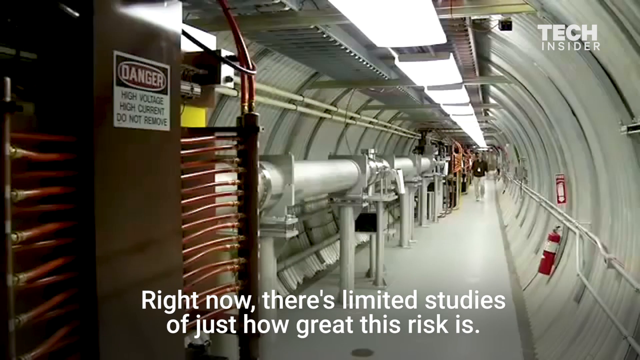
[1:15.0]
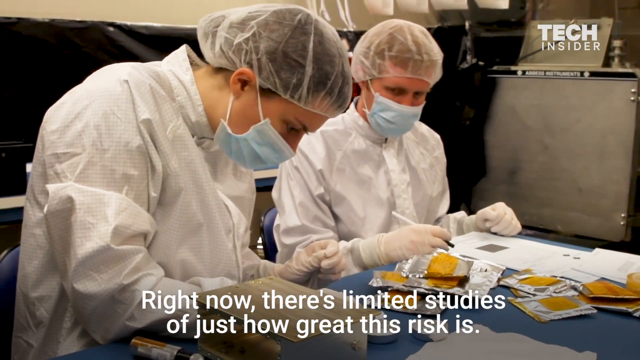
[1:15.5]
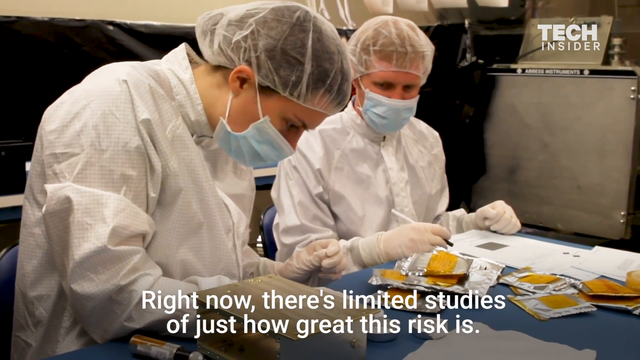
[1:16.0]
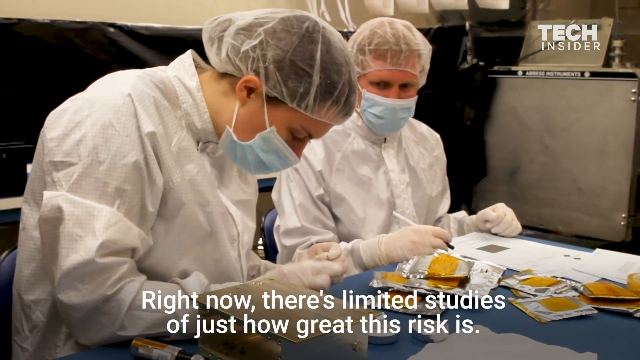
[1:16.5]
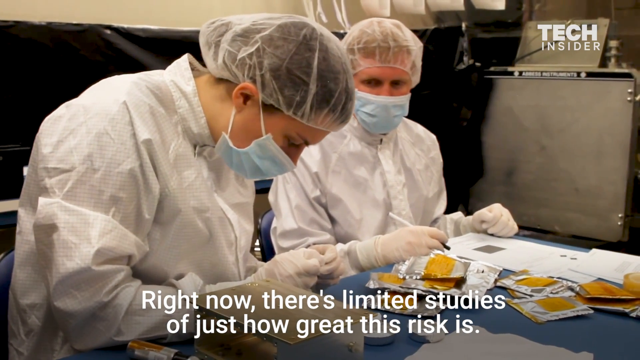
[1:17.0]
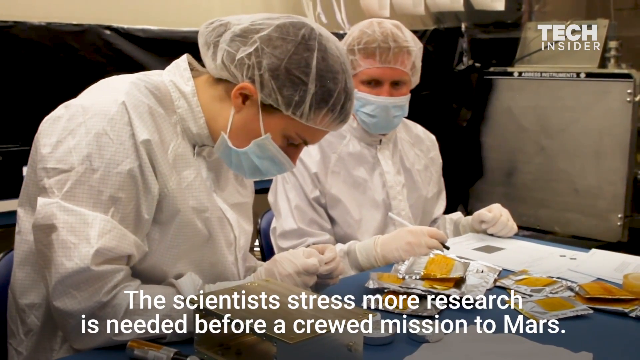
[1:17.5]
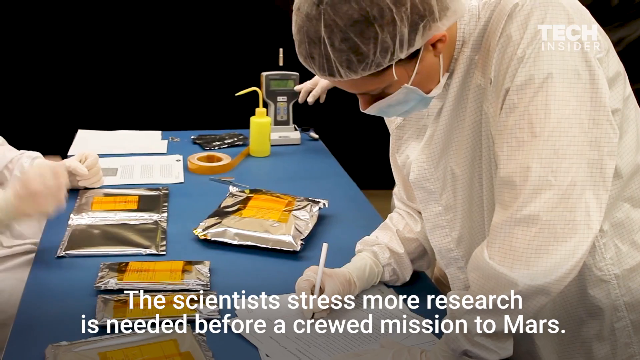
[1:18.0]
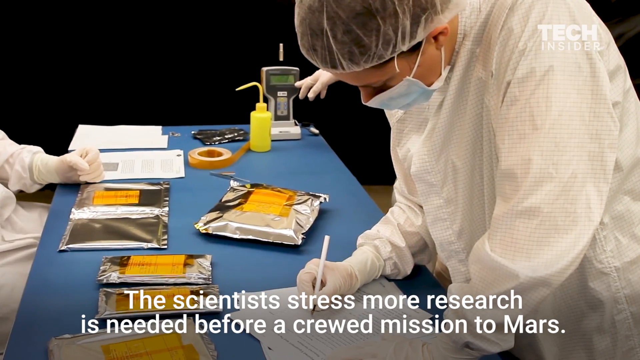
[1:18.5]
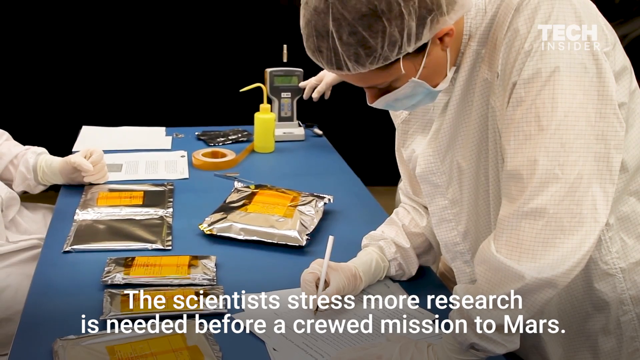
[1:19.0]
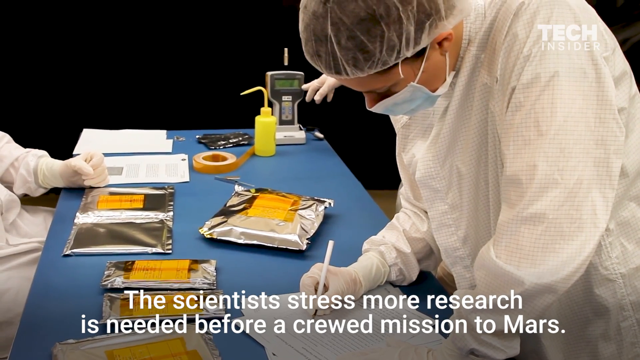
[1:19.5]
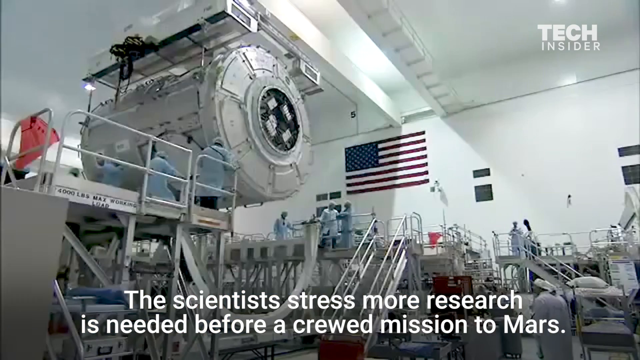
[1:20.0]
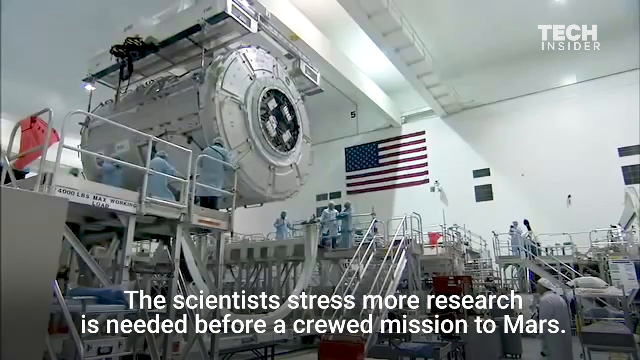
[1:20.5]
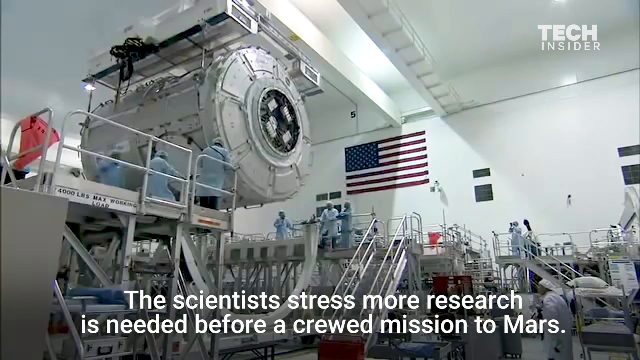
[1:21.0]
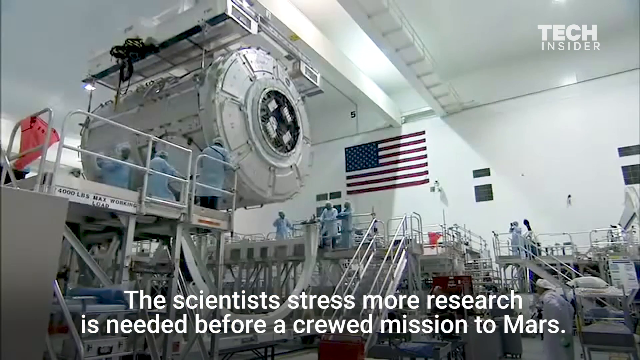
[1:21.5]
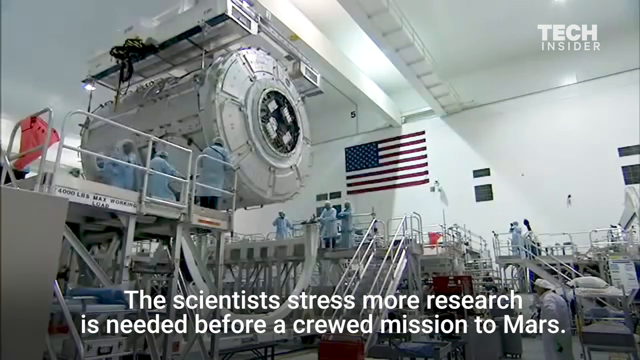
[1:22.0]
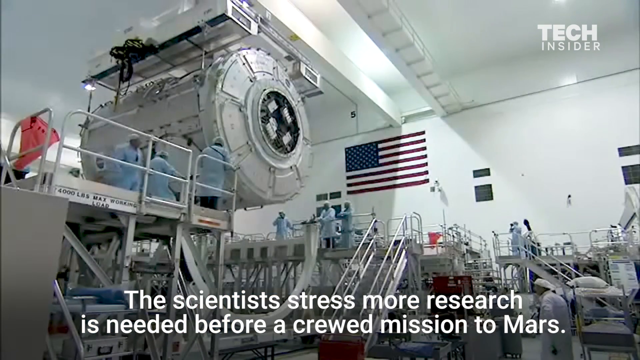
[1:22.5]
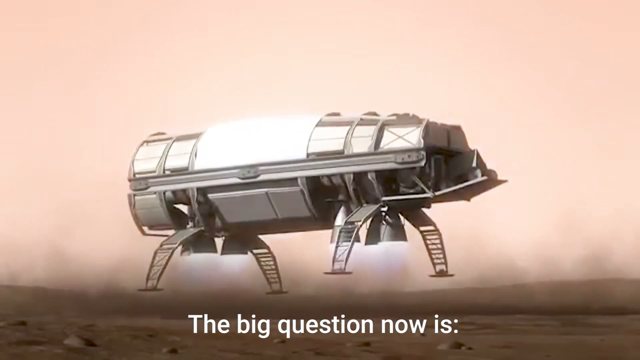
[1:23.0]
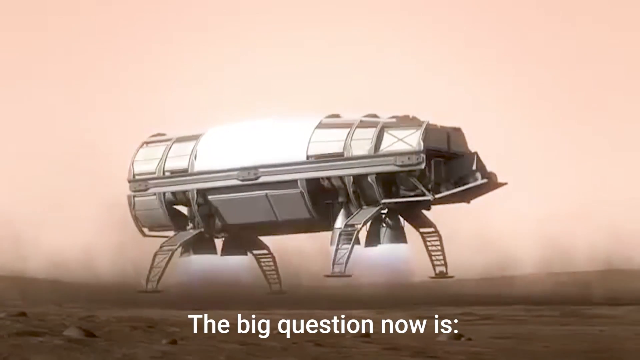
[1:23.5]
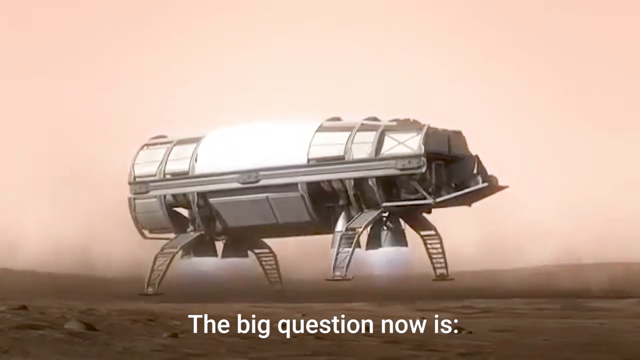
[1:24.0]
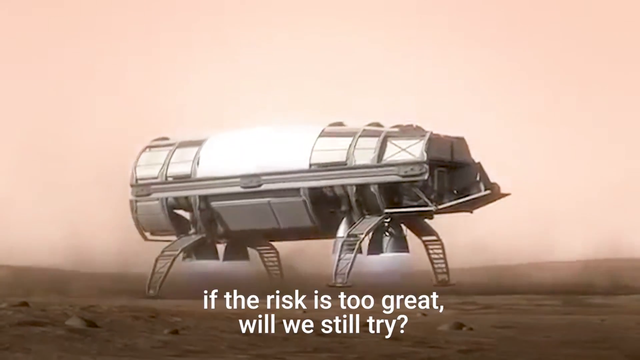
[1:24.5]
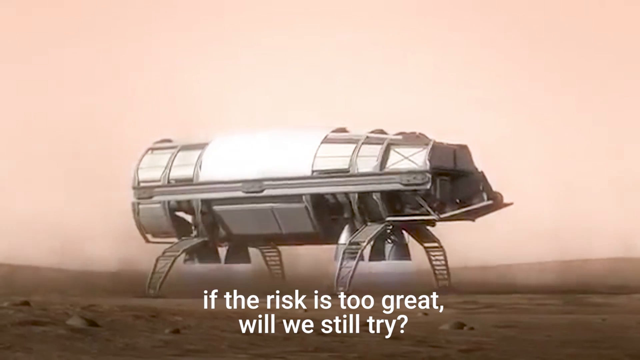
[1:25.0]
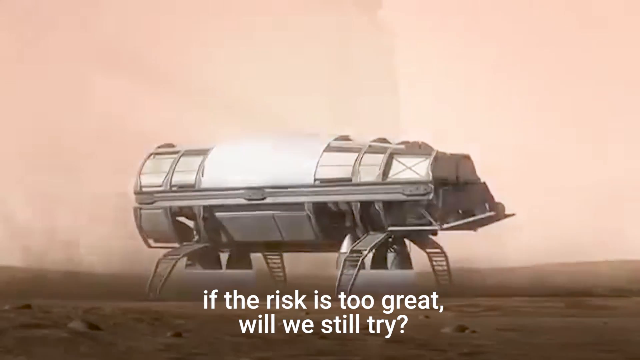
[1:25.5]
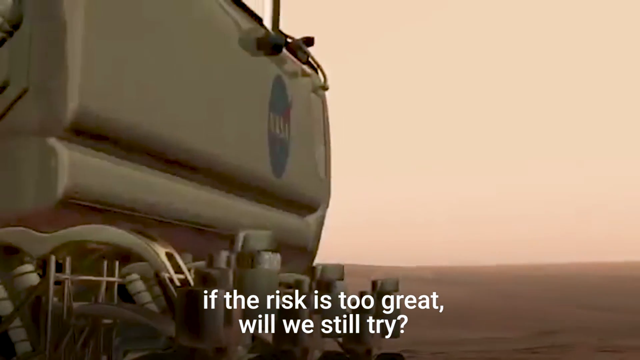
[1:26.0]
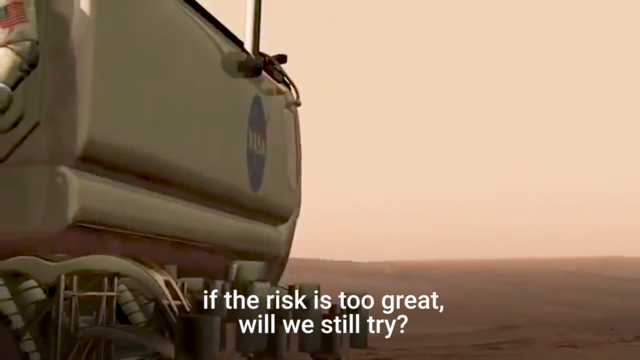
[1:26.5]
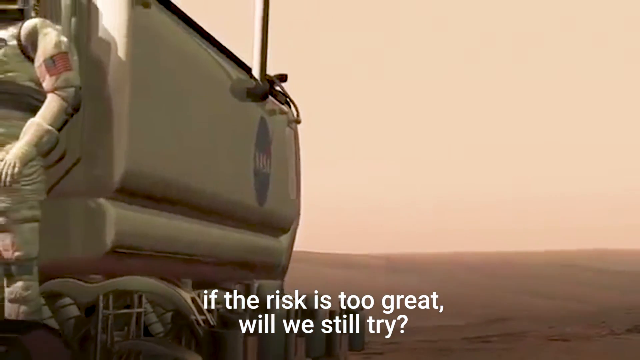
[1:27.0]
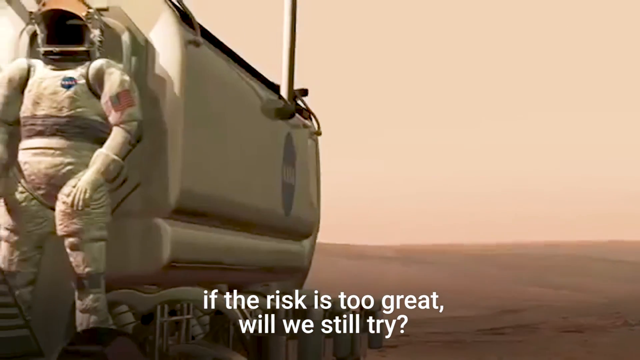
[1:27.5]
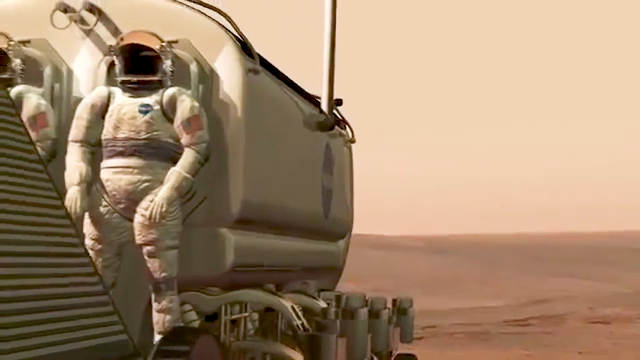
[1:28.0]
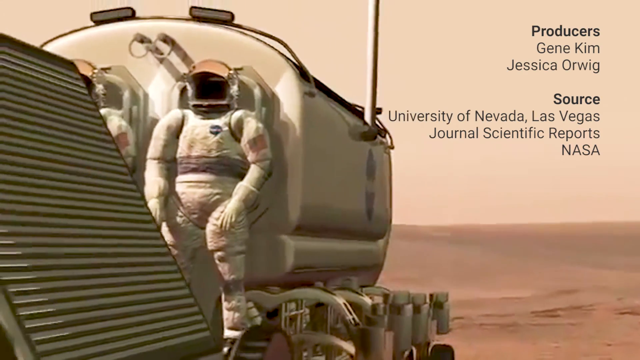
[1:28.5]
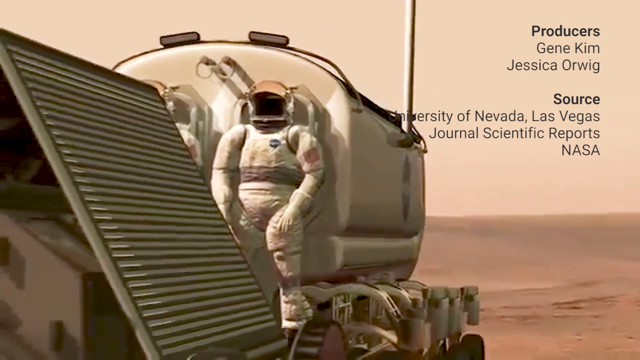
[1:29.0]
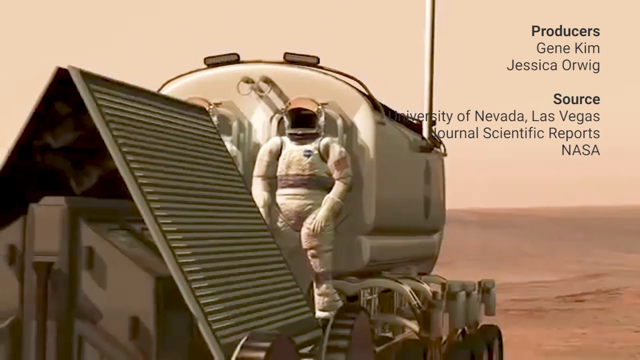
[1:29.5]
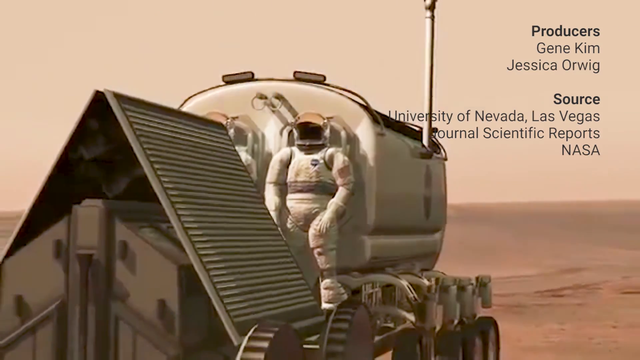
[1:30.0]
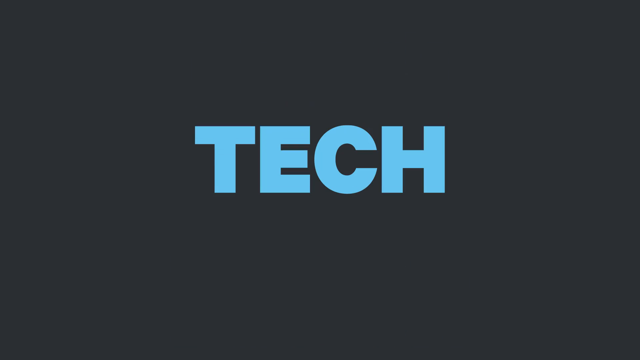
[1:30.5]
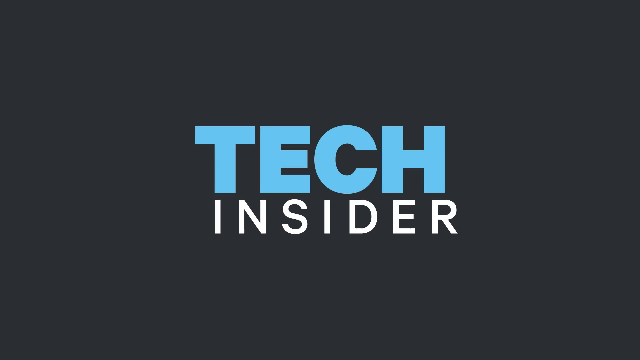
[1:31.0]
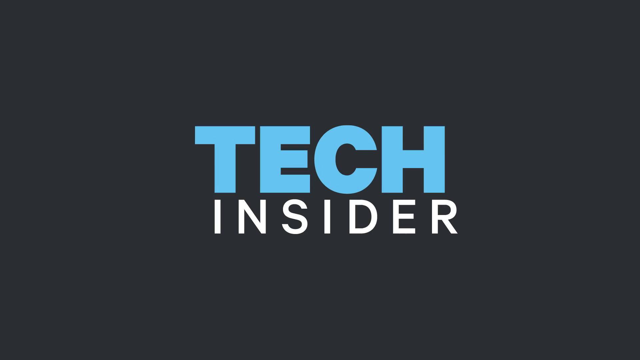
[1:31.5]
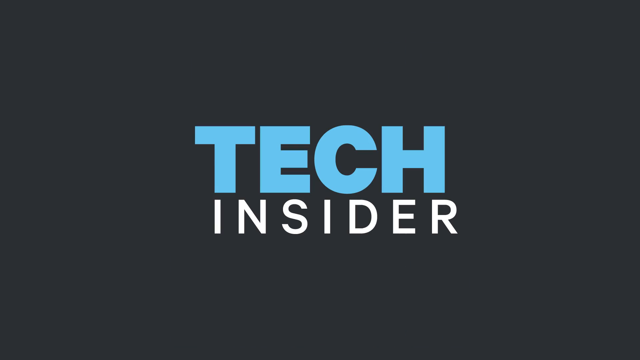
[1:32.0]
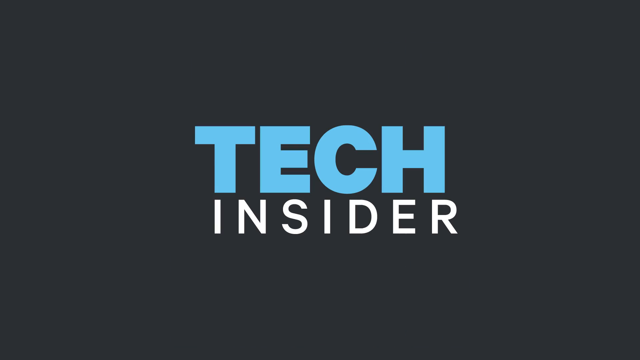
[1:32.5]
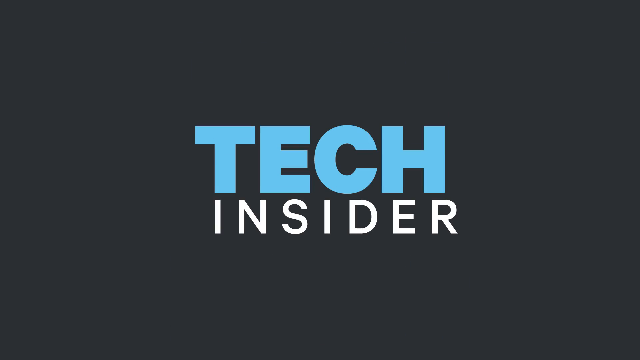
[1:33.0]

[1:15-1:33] Teams of people wear clean suits with nets on their hair and masks across their faces. They seem to be inspecting or working on equipment, possibly to be flown to Mars. A wider shot shows some sort of modules, or maybe rocket tubes, inside a large white room or possibly a hangar. An American flag is on the wall, so this is probably NASA. Next, a CGI representation shows some sort of lander touching down on the surface of Mars, followed by some sort of rover with people sitting on the outside of it as it probably rolls across the surface.